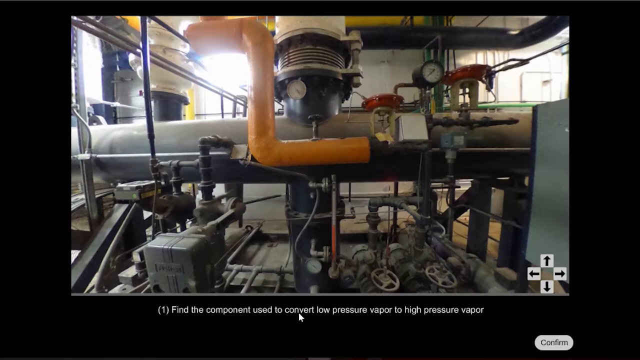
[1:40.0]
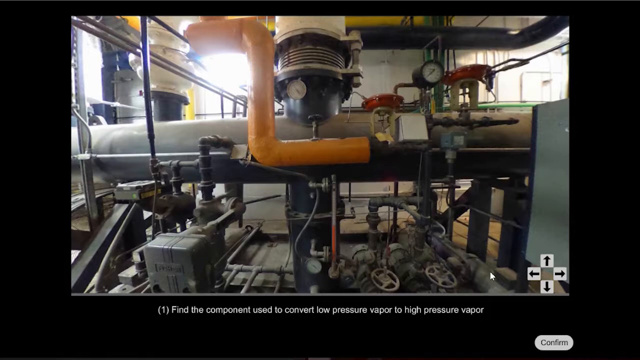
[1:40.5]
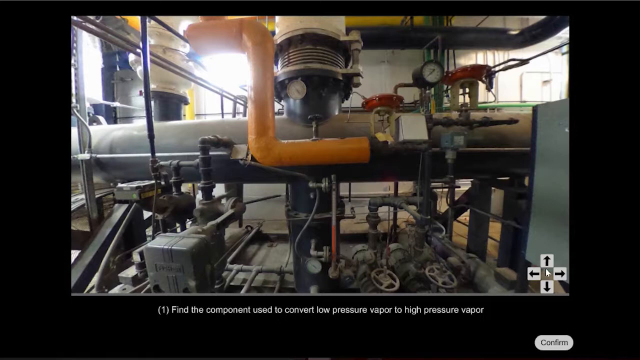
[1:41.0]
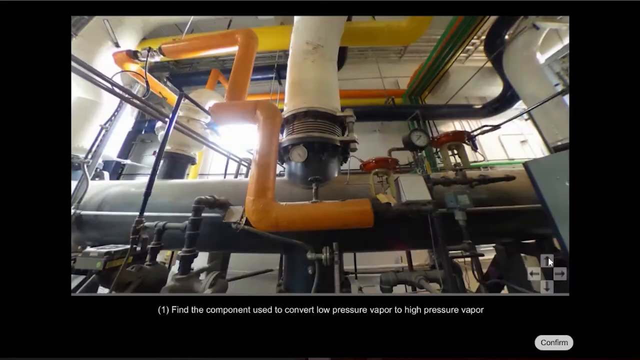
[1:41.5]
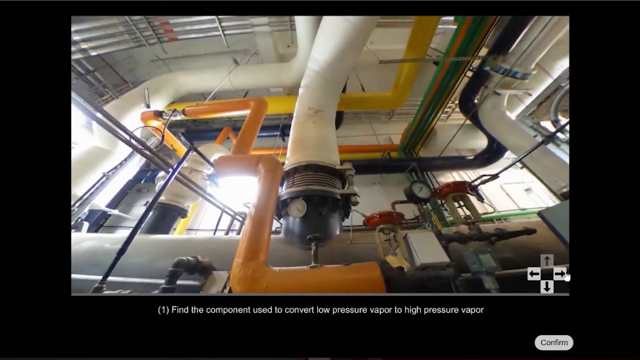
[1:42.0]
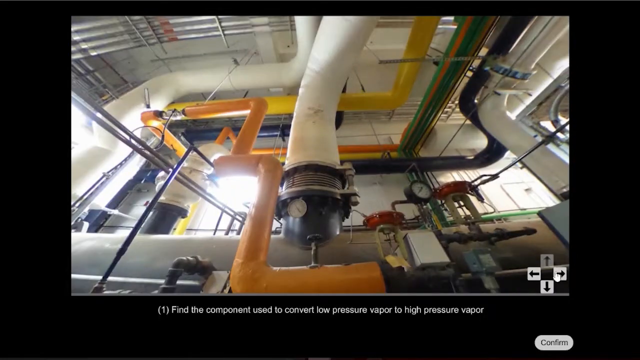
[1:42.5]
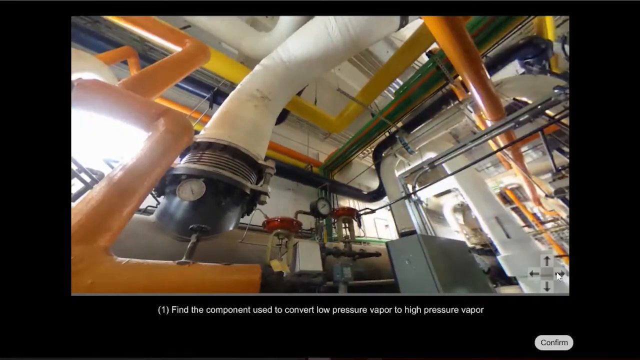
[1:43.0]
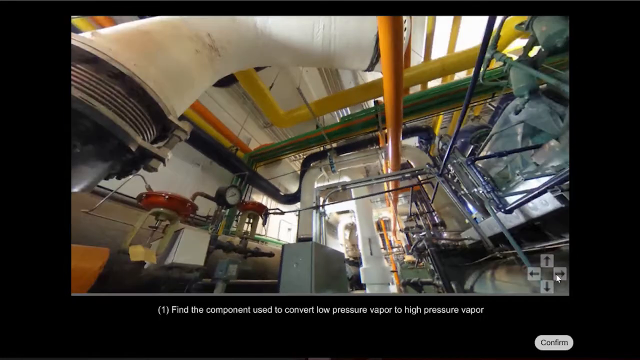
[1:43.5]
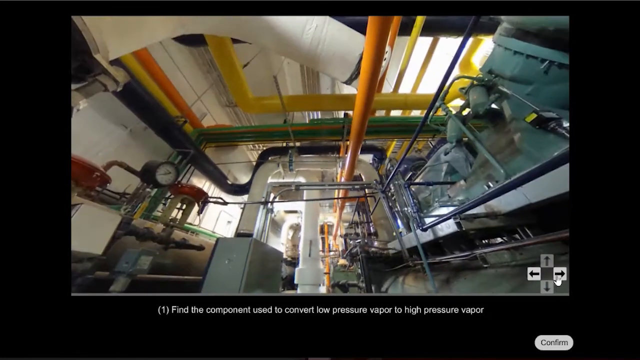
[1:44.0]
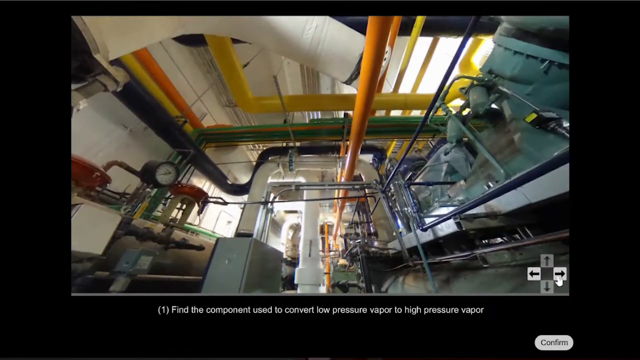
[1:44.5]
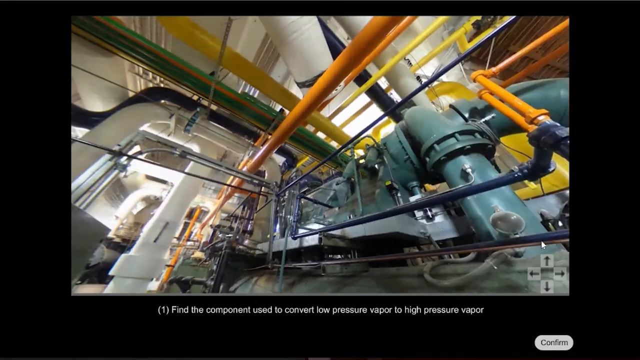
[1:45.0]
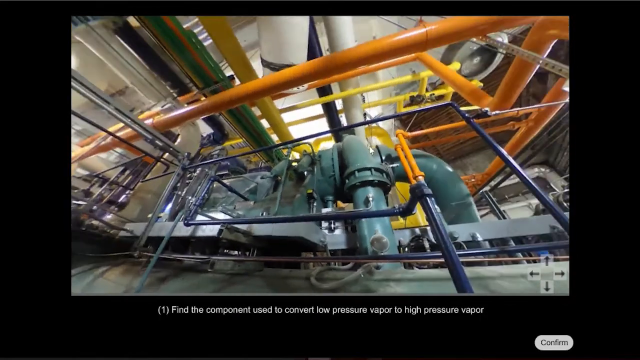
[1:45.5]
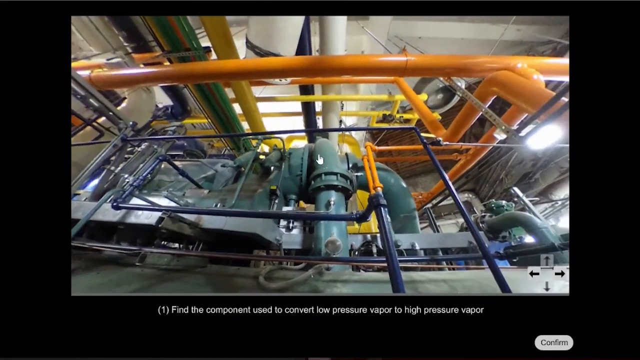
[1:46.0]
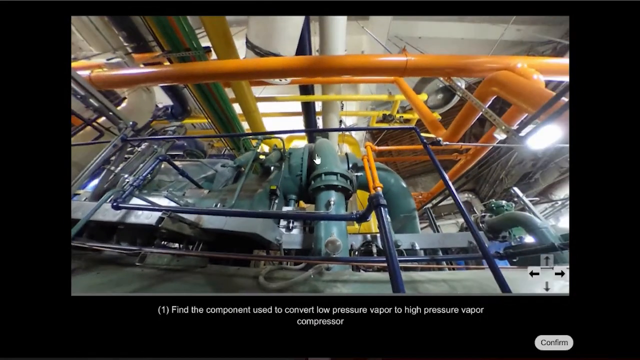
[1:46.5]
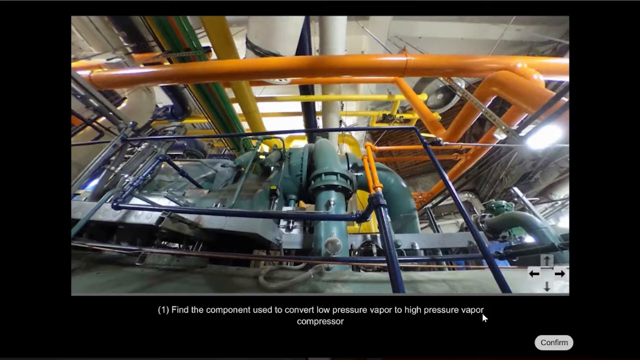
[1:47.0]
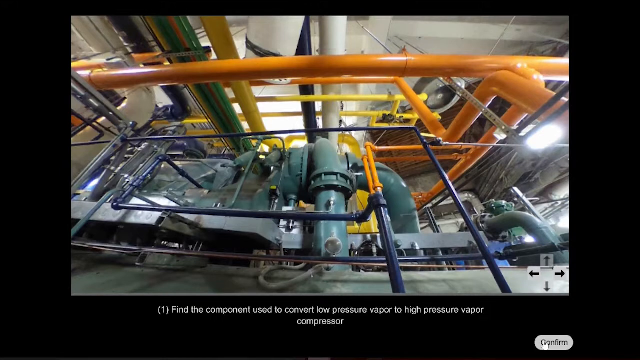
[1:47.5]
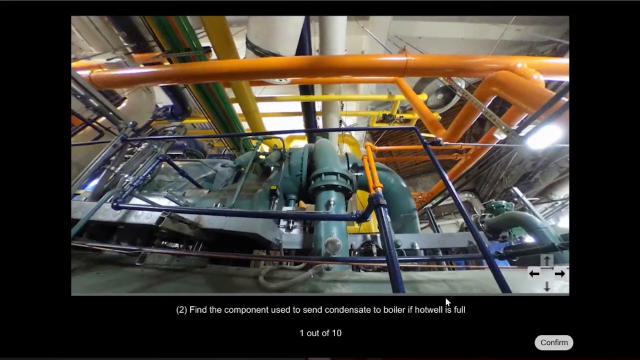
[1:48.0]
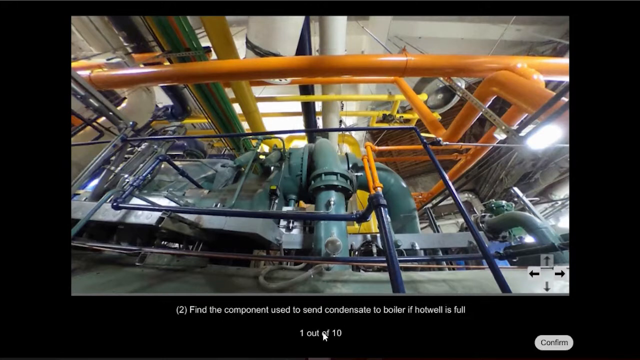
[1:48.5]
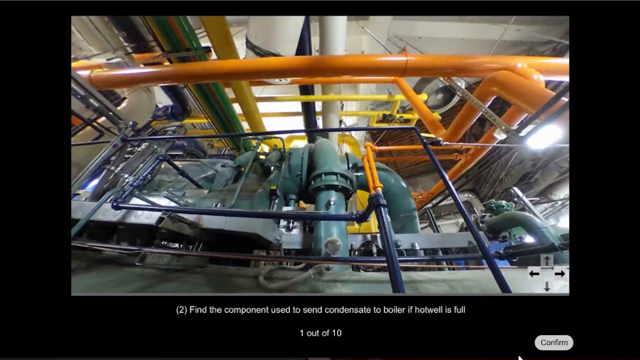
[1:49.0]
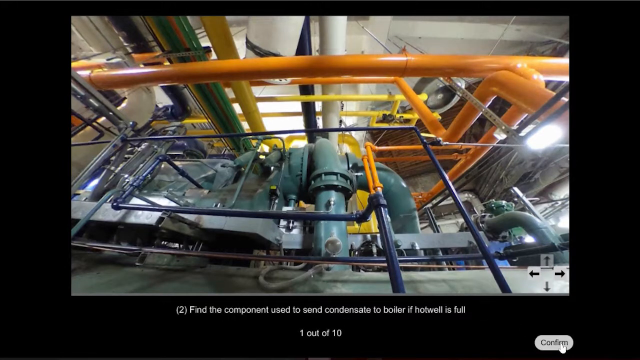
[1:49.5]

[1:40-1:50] The view pans up over the same machinery, showing all kinds of overhead piping in different sizes and colors: smaller yellow piping, medium-sized orange piping and larger white pipes, along with gauges and valves. The user pans with the arrow keys, first up, then to the right, then to the right again, and the camera follows the user's direction. Text displays question two: "find the component used to send condensate to boiler if hotwell is full."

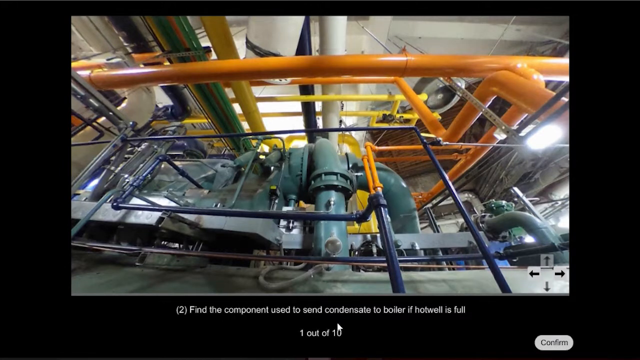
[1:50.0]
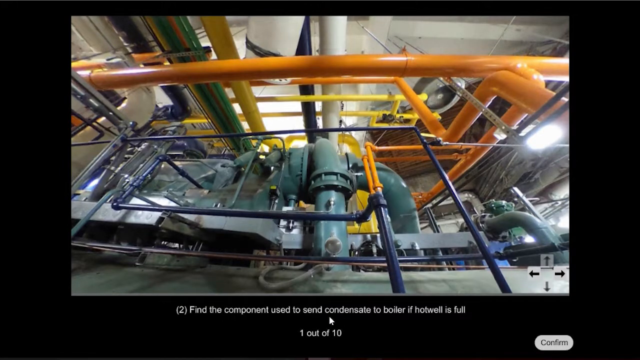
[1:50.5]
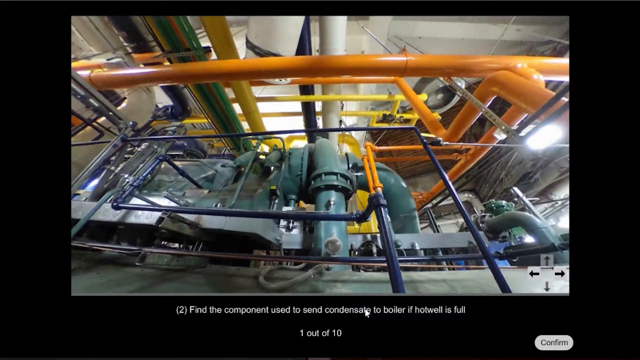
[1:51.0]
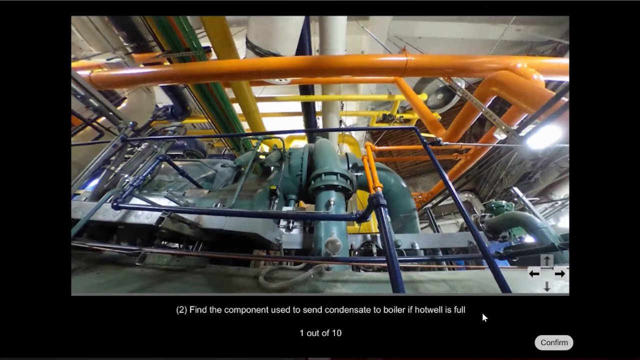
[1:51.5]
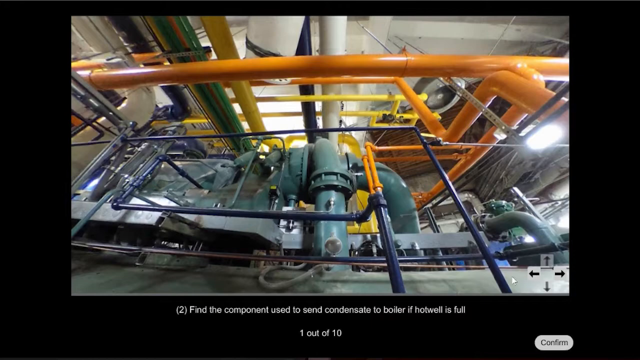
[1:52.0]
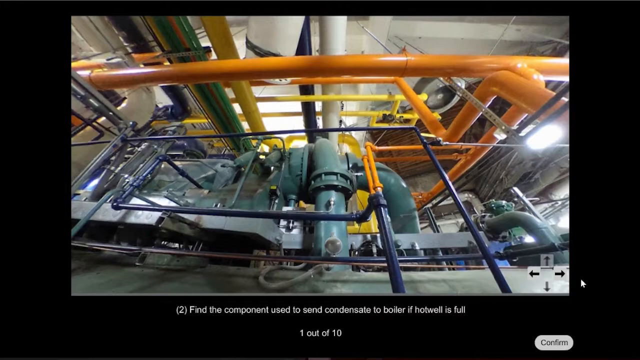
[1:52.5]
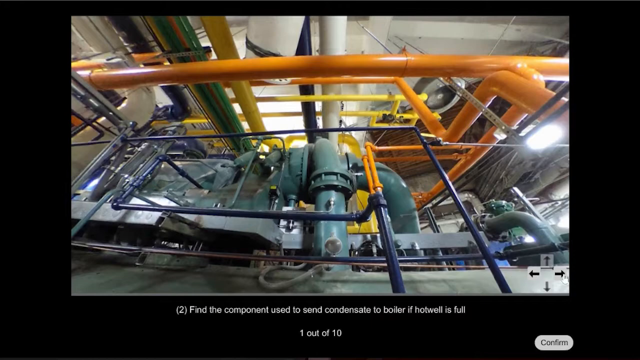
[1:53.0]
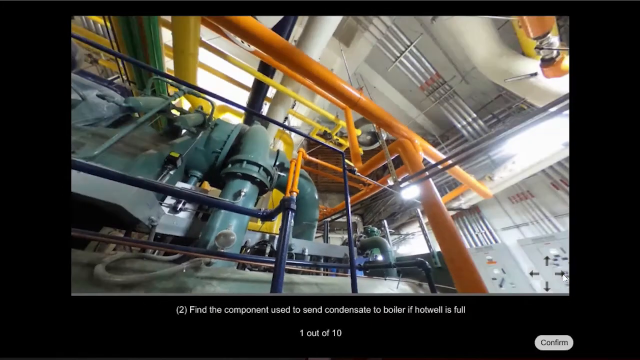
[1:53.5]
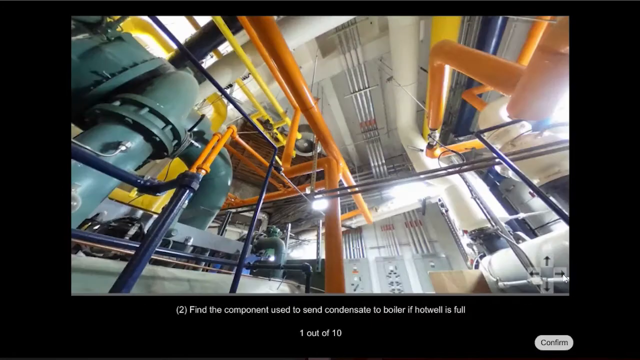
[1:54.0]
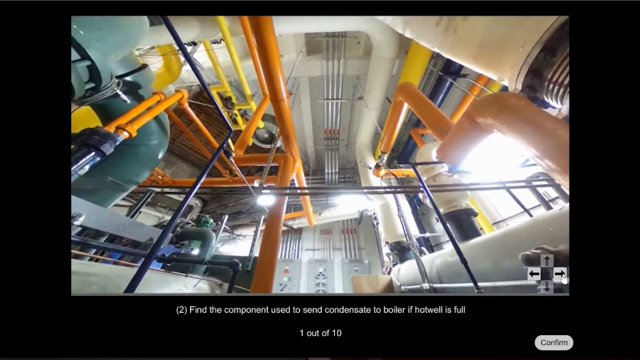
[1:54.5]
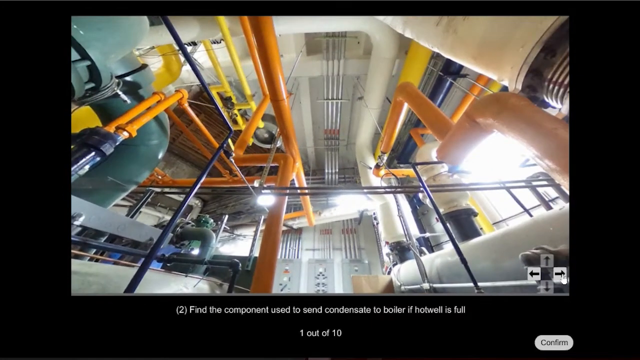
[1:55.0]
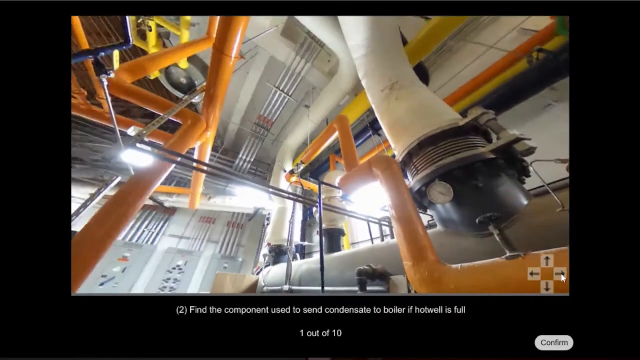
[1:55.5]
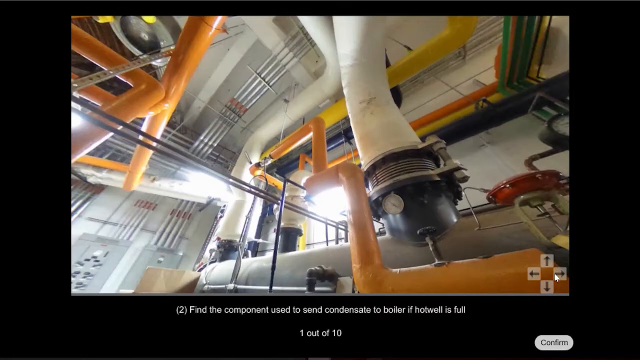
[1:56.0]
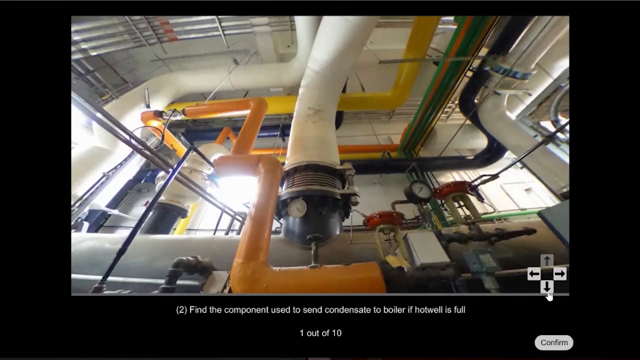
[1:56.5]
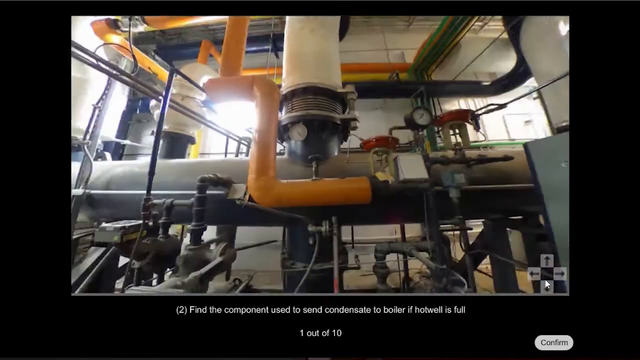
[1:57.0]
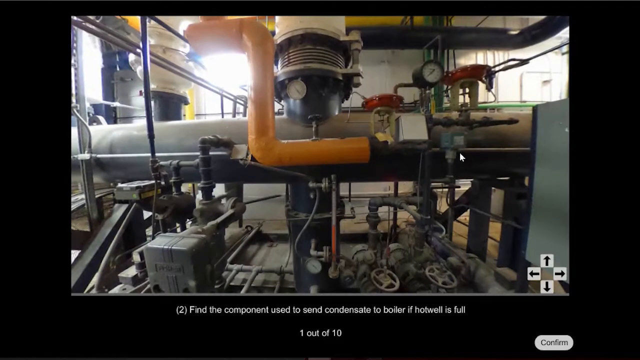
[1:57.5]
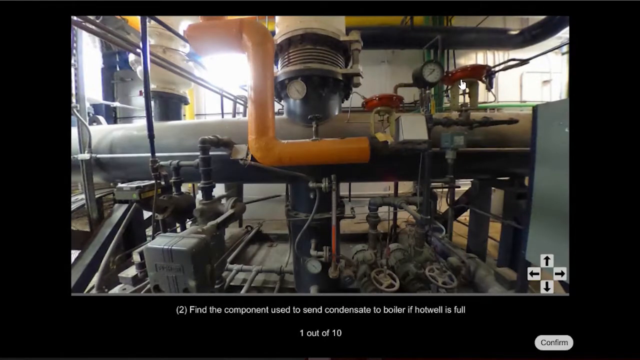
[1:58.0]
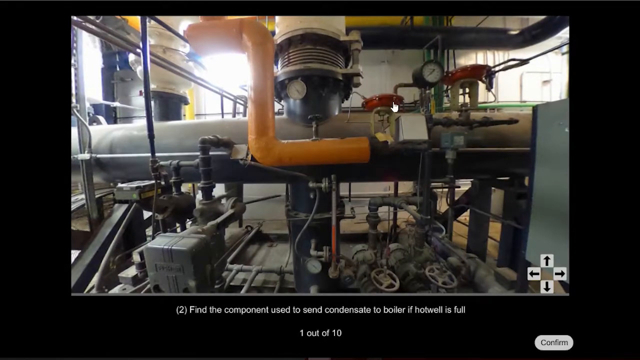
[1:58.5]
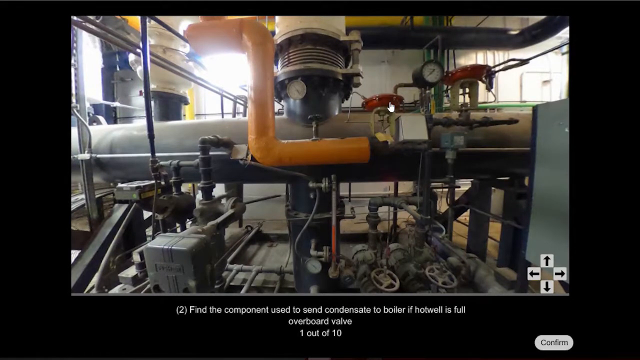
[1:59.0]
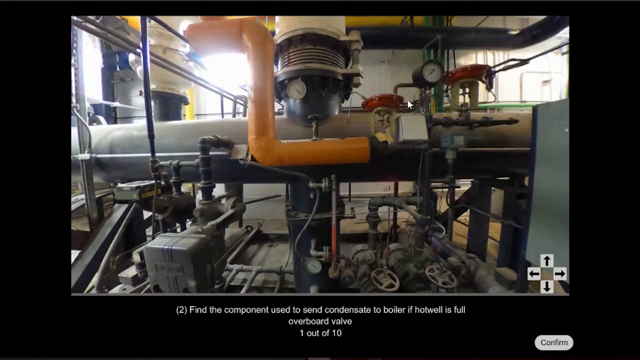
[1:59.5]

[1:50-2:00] The user is positioned in front of the piping. They scroll to the right, continue right with a slight upward angle, then scroll down. They hover the cursor over a gauge and a couple of other components. The question on screen is "2. Find the component used to send condensate to boiler if hotwell is full." The user searches for the component that answers the question. The gauge appears to belong to the machine that was on the far right when the view turned around; moving with the arrow keys, he looks for that gauge on the machine to the right and clicks it.